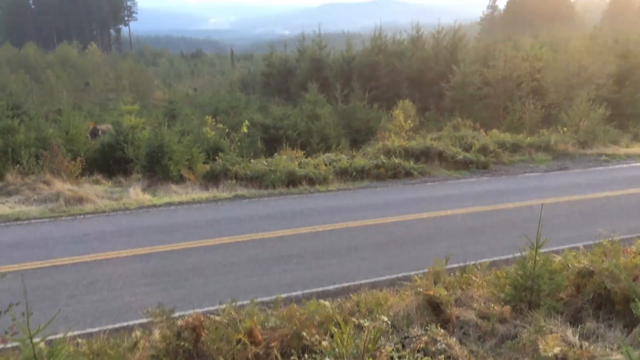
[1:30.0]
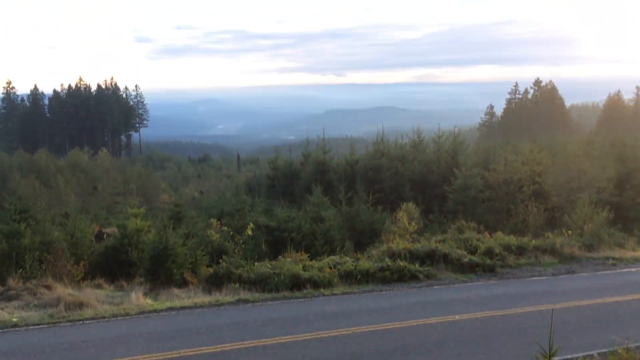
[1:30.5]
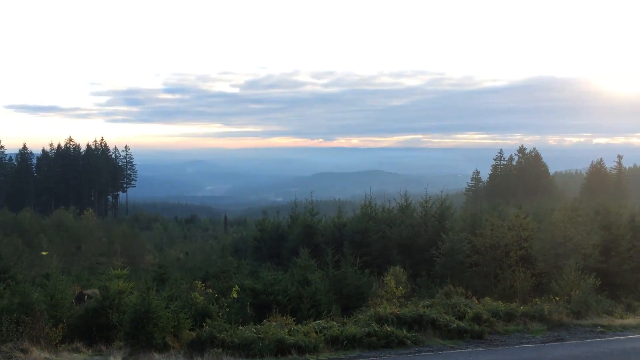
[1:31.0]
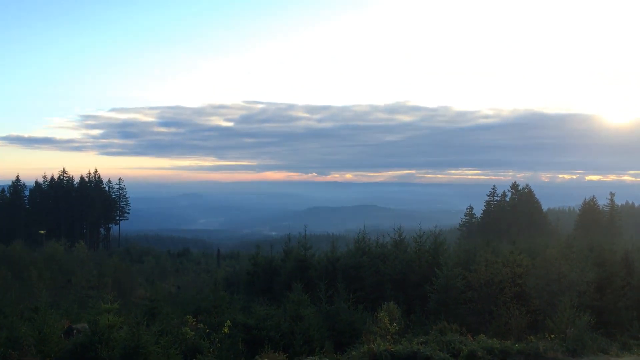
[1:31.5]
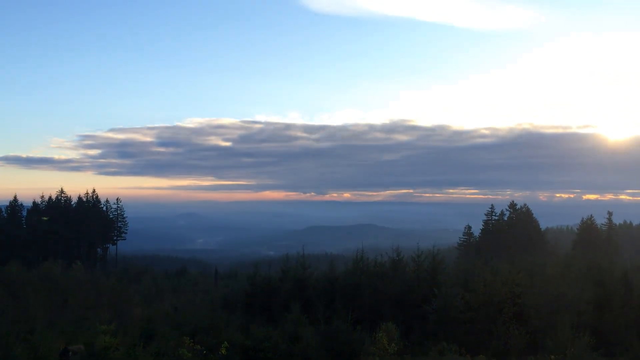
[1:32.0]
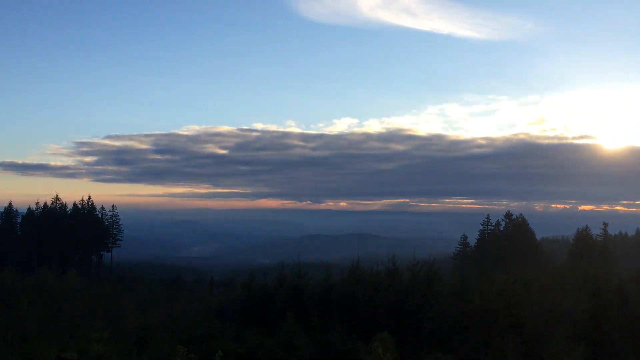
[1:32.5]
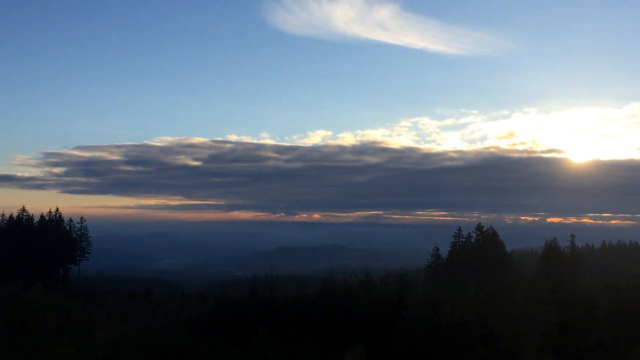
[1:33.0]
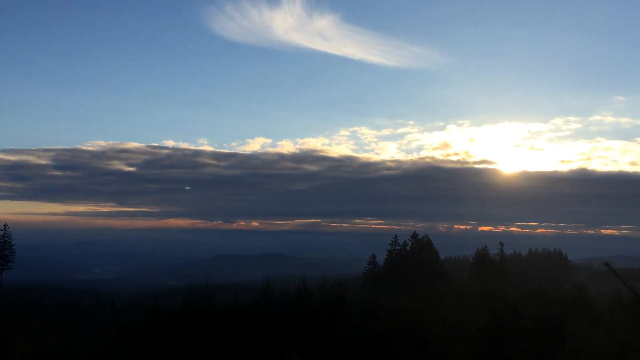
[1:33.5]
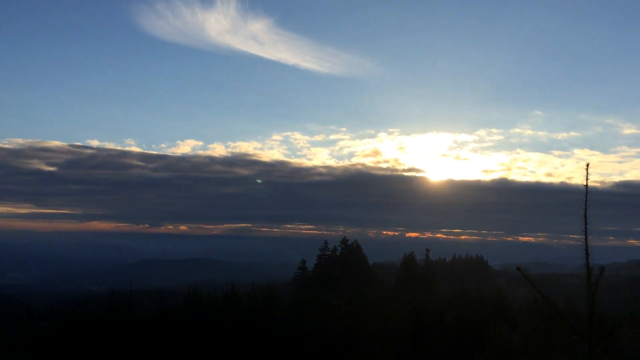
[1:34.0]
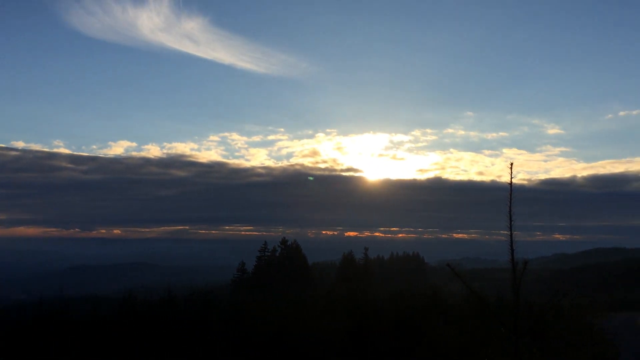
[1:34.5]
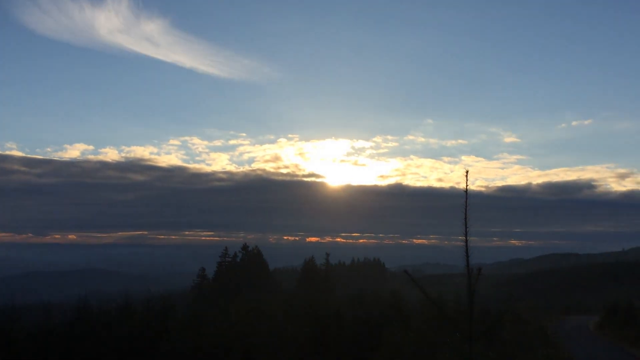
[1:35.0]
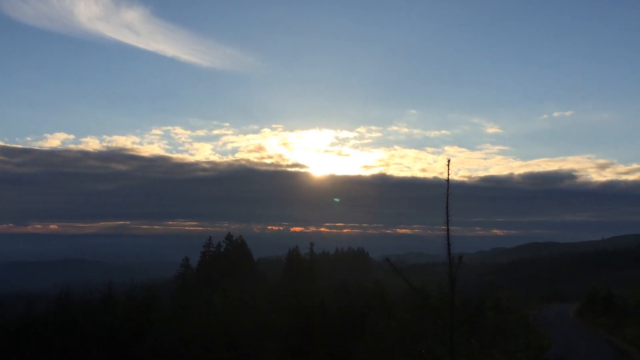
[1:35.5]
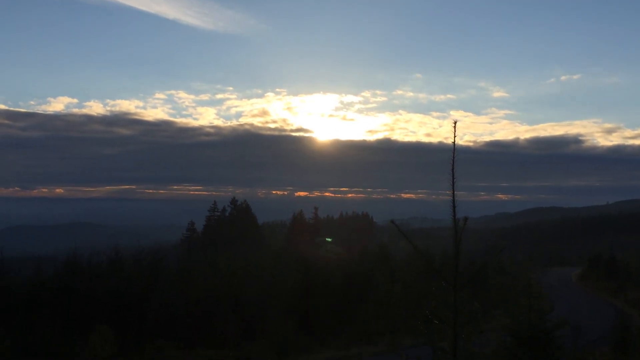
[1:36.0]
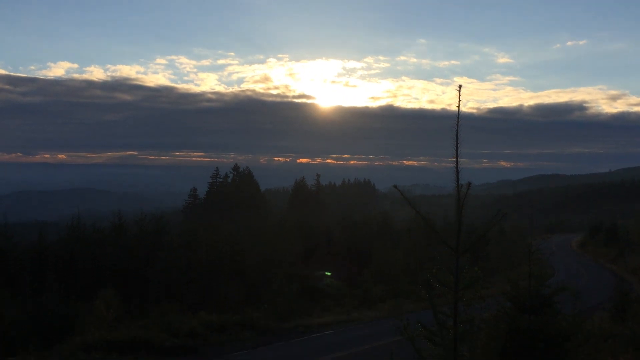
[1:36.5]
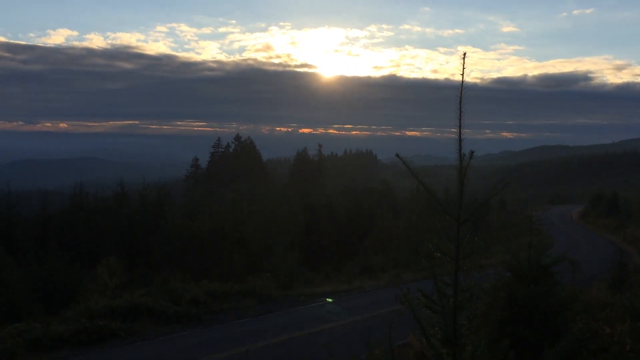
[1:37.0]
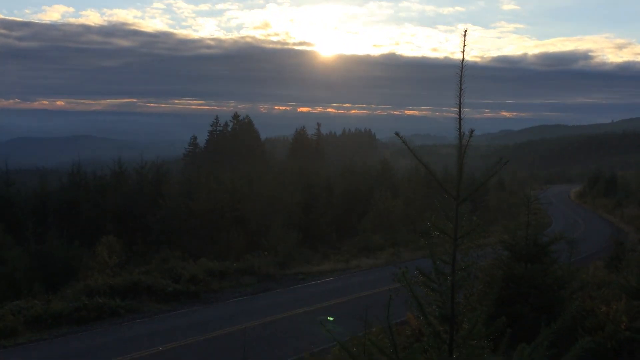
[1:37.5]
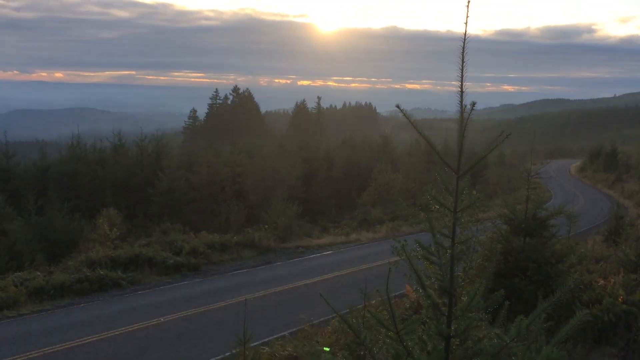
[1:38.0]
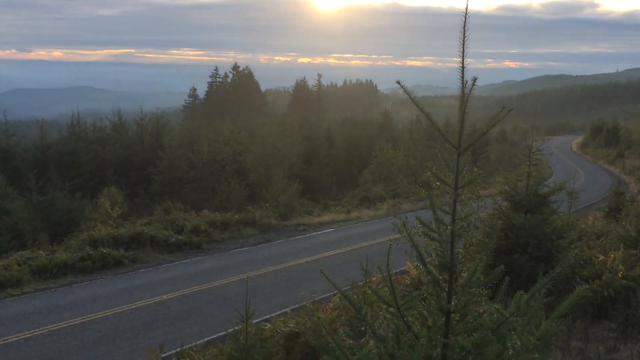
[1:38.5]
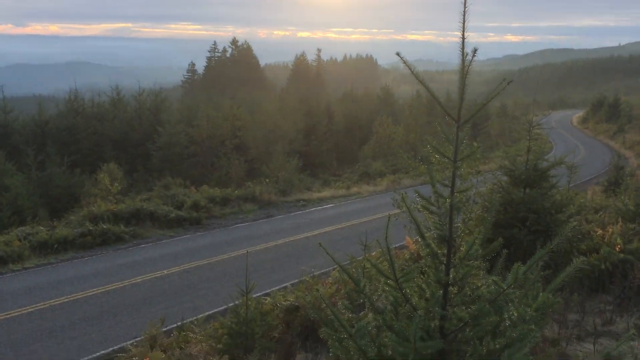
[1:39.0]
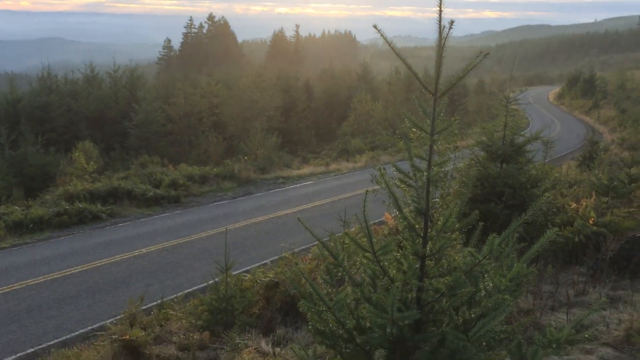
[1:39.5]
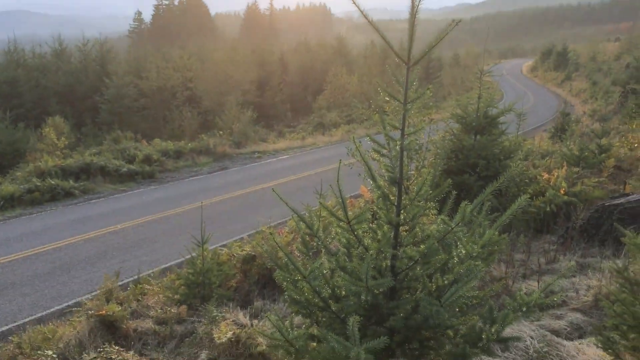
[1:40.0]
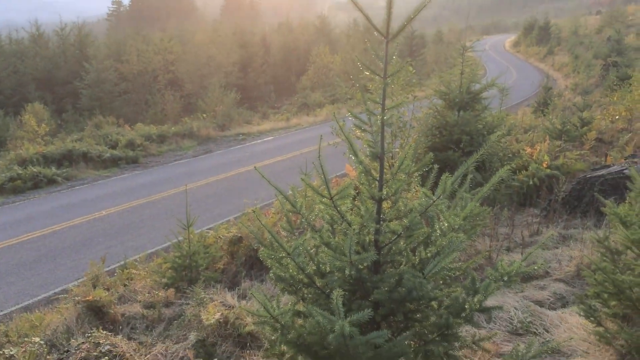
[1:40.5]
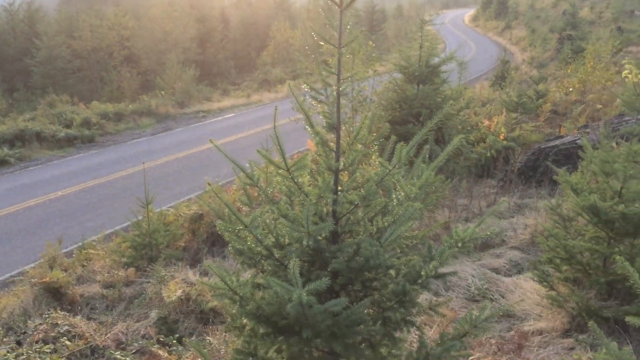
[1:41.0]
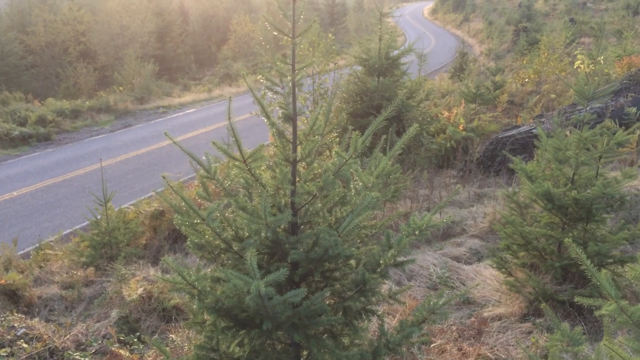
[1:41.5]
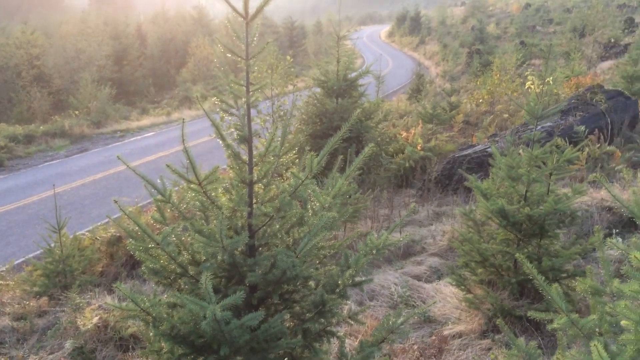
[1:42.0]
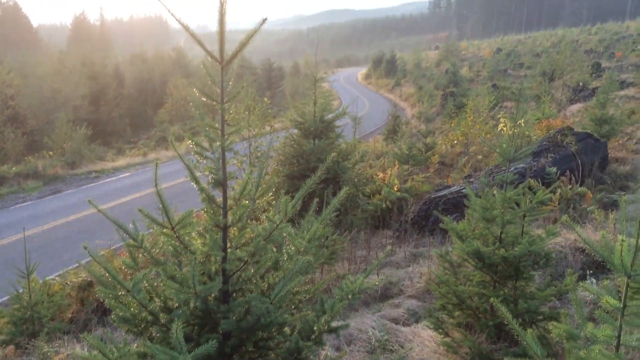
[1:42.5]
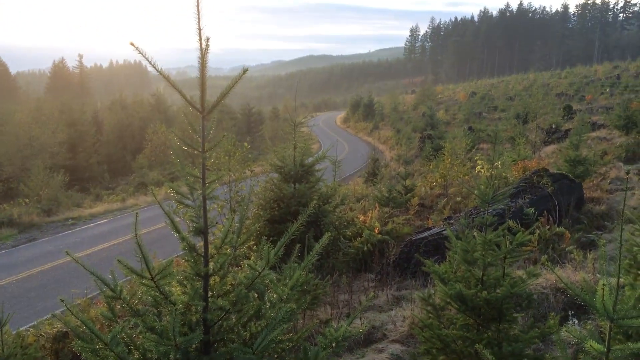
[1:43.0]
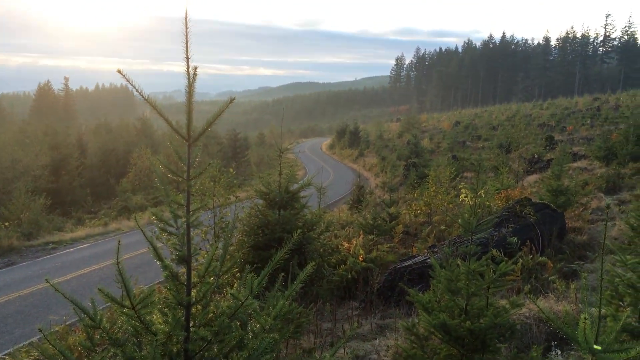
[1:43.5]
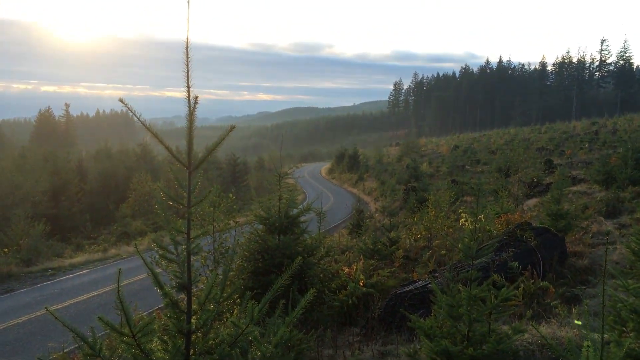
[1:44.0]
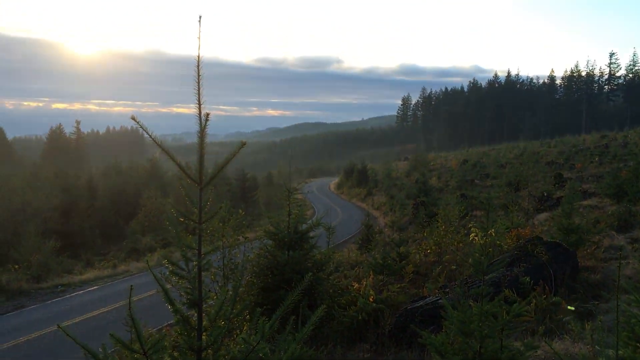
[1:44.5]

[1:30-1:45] The camera pans up from the lower highway shot to look up at the sky, seeing foliage, then pans down to some foliage right in front of it, showing green foliage and some brown dirt. It pans up again and around to the landscape. Thick clouds in the distance mainly cover the sun, and the sun's glare covers the image as the camera drops down. The camera moves up and around, showing different light textures across the landscape. The blue sky is mainly clear at the very top, and toward the bottom the empty highway winds away, with its yellow dividing line and its sidewinding shape leading into the distance. Long trees appear at the very front at the beginning, and toward the end a large, tall bush with green foliage is right in front of the camera.